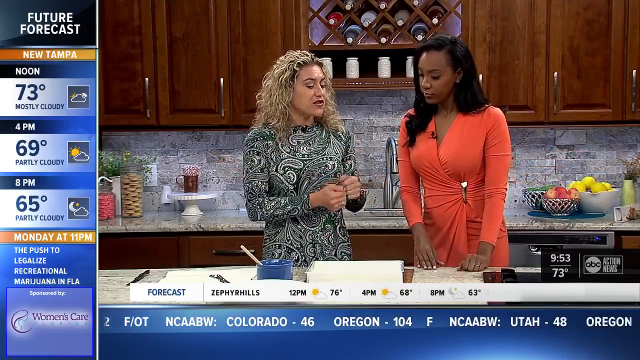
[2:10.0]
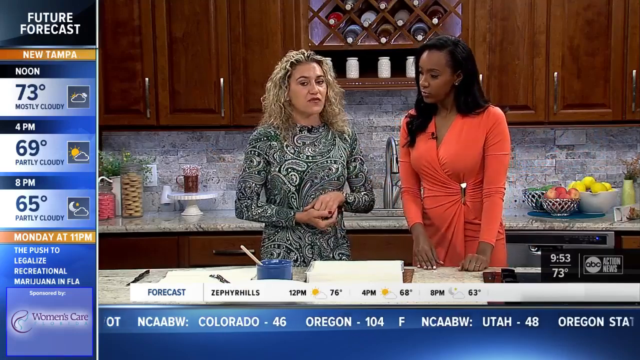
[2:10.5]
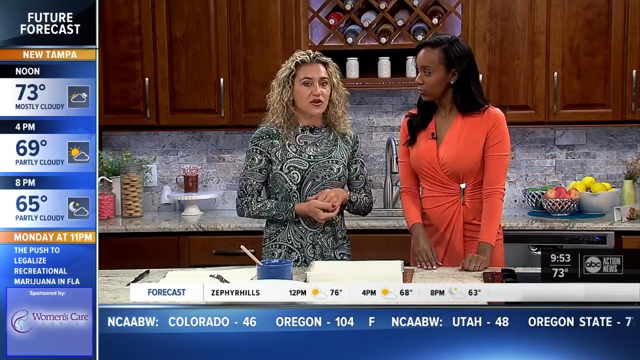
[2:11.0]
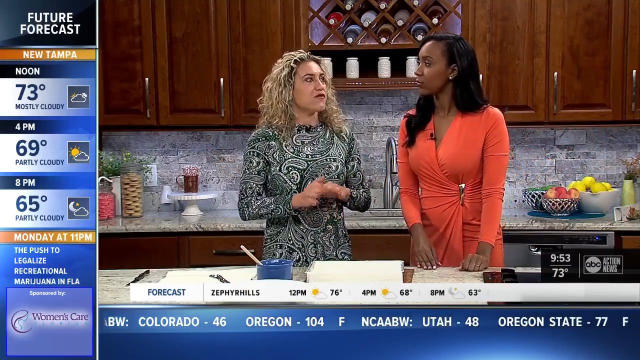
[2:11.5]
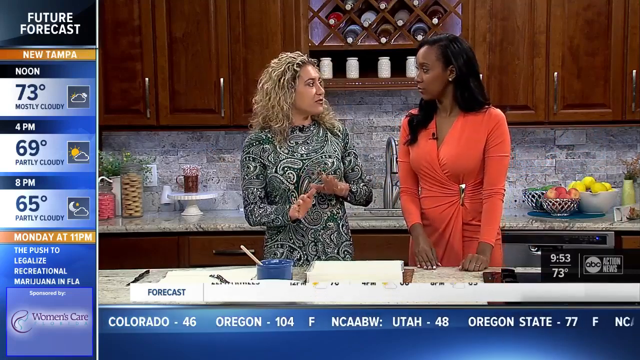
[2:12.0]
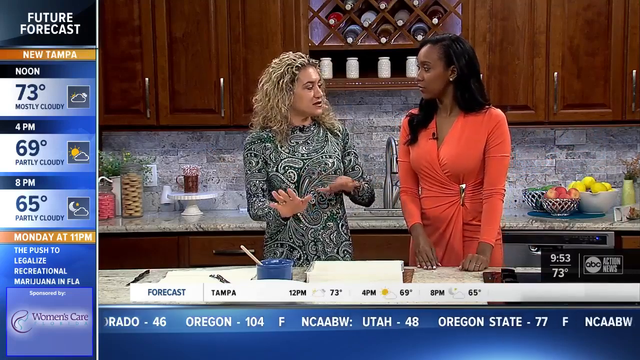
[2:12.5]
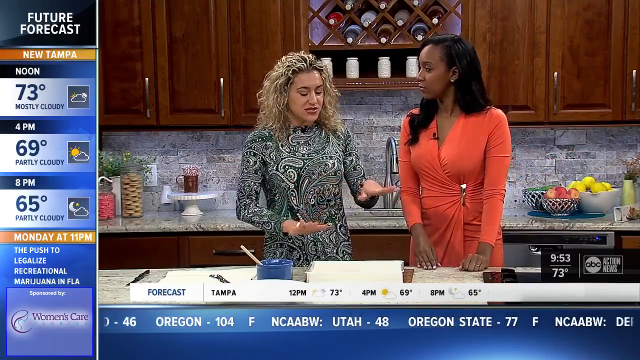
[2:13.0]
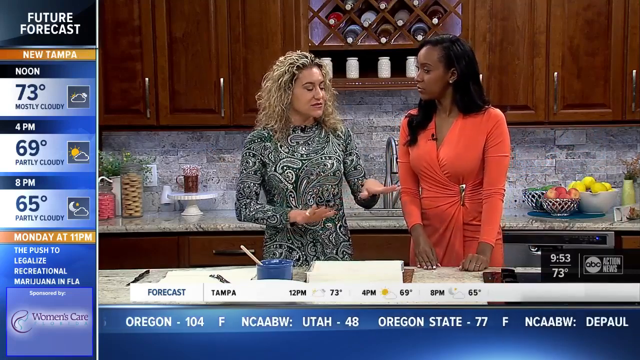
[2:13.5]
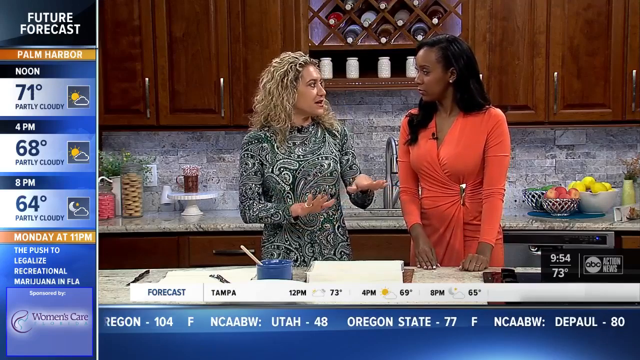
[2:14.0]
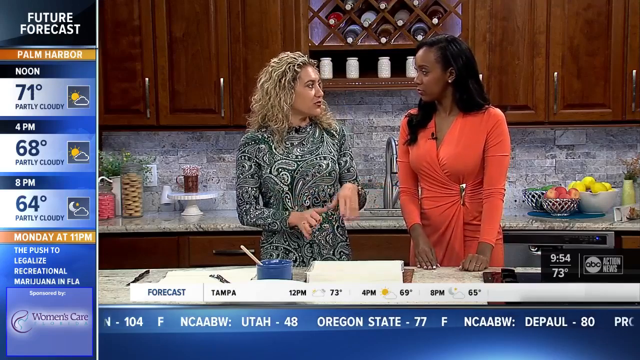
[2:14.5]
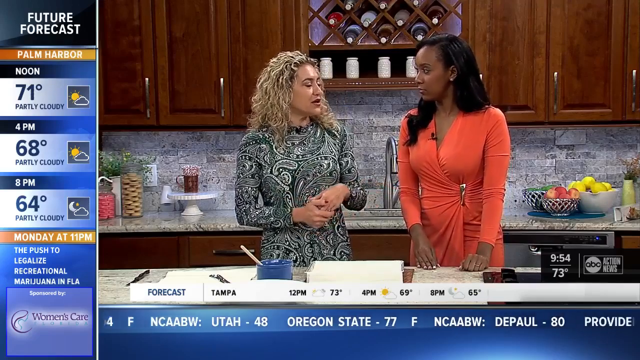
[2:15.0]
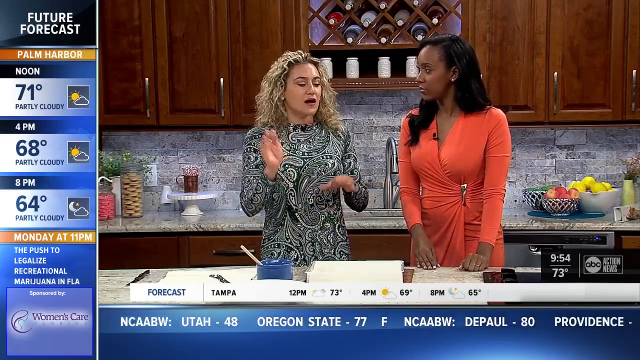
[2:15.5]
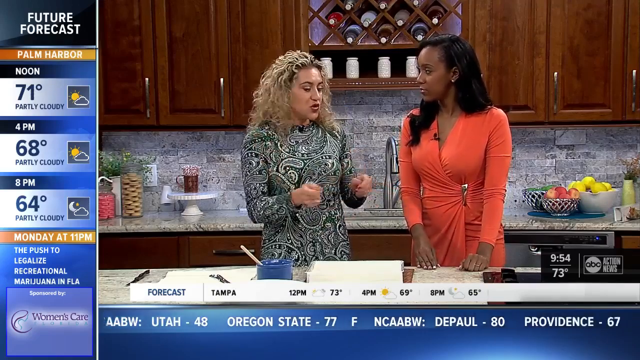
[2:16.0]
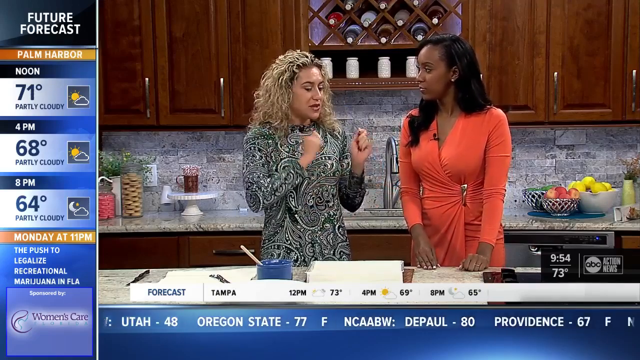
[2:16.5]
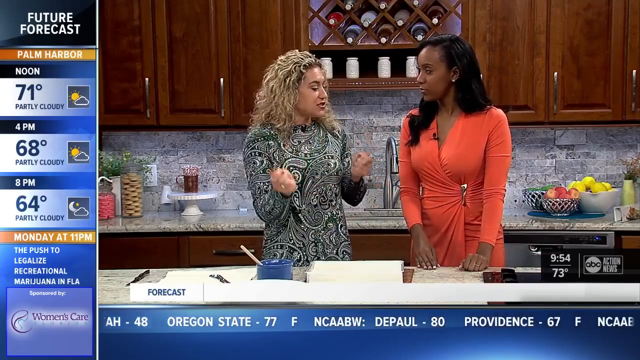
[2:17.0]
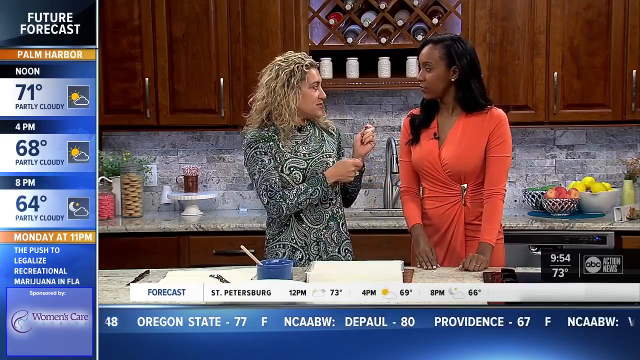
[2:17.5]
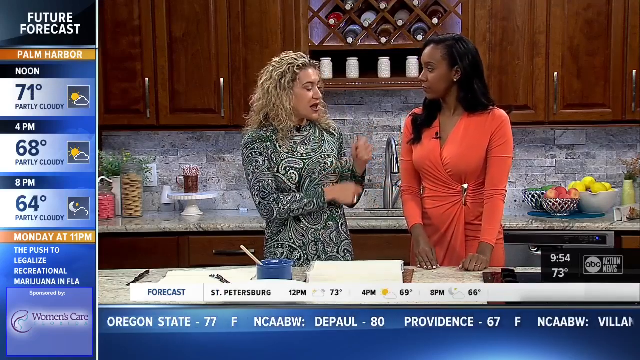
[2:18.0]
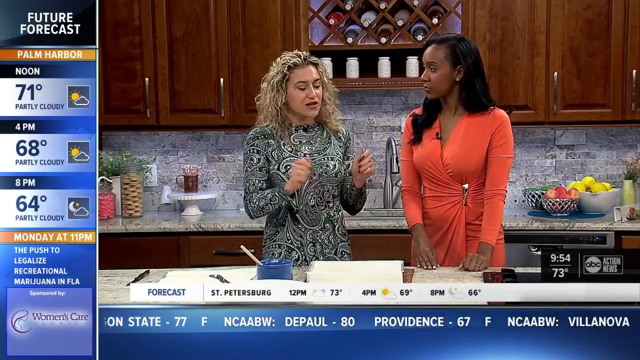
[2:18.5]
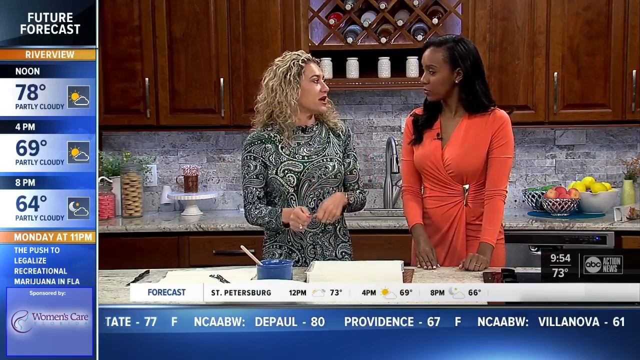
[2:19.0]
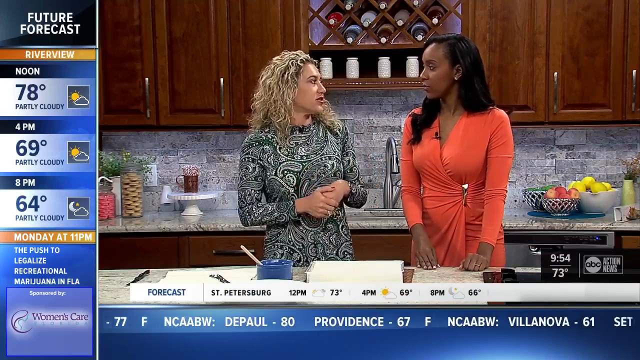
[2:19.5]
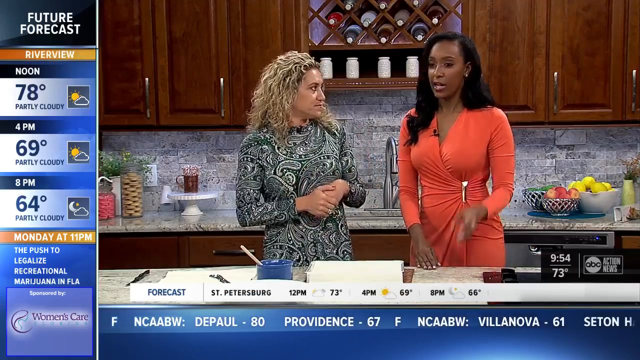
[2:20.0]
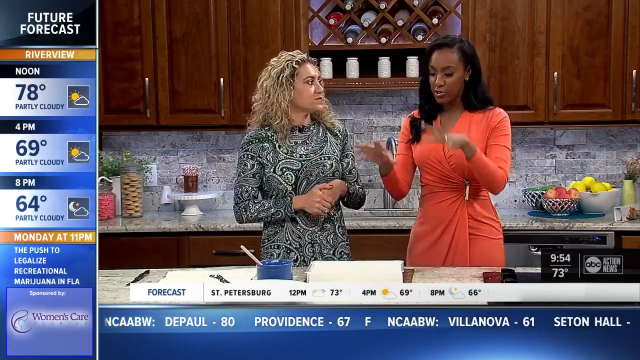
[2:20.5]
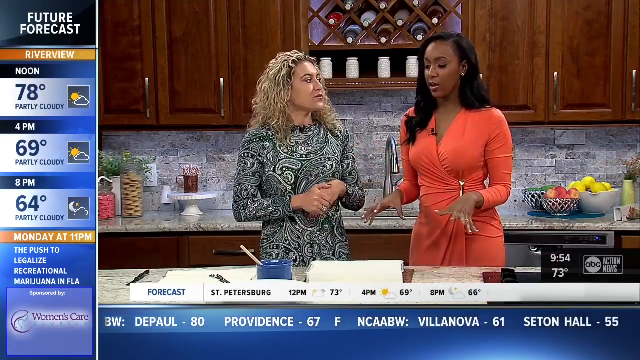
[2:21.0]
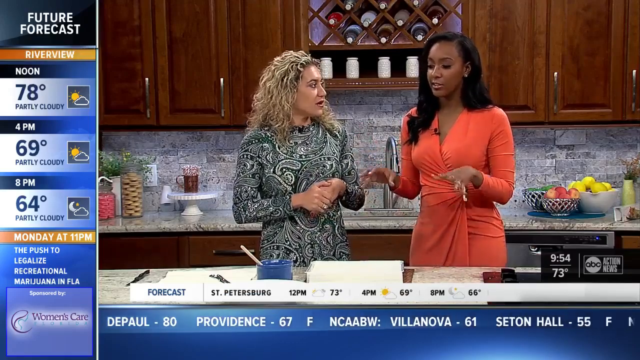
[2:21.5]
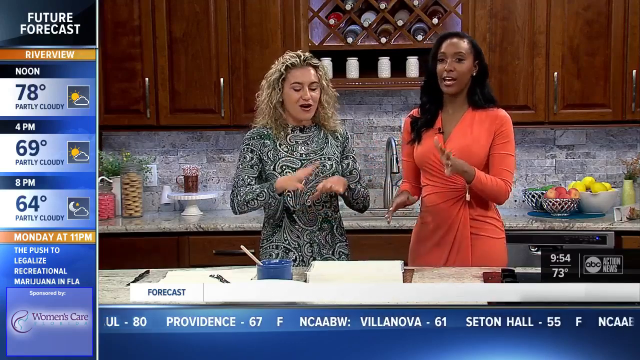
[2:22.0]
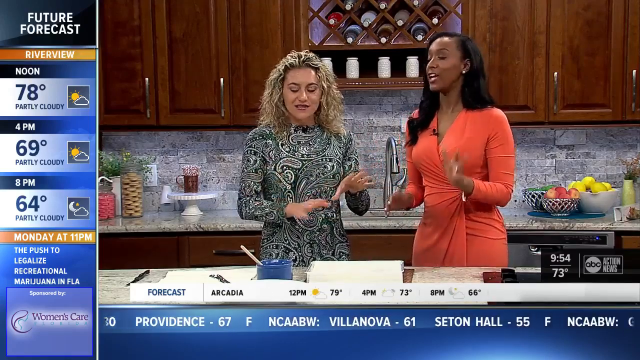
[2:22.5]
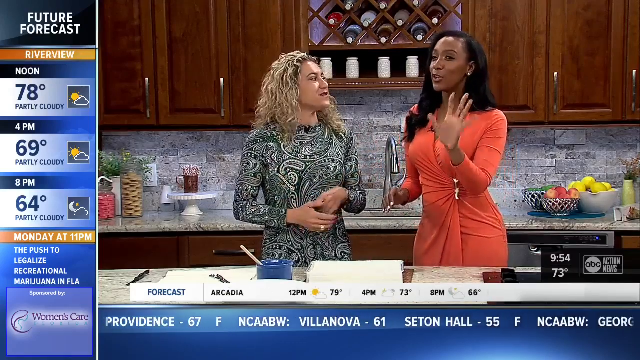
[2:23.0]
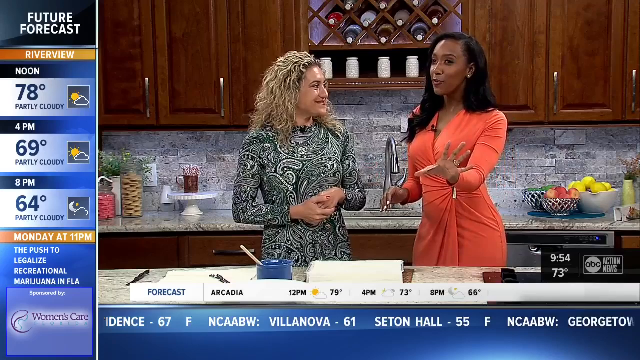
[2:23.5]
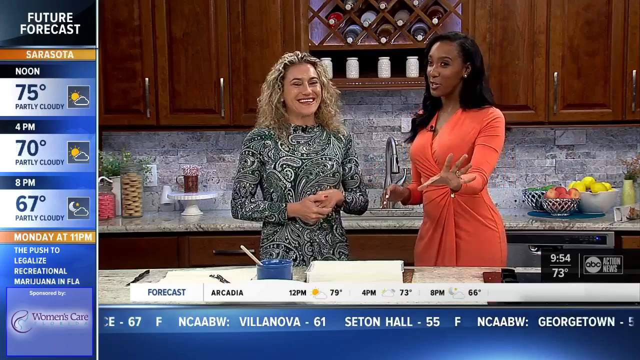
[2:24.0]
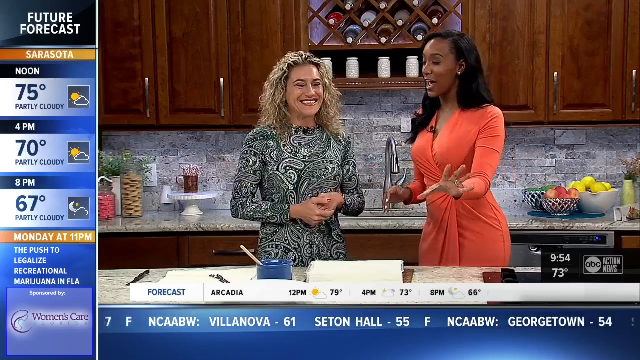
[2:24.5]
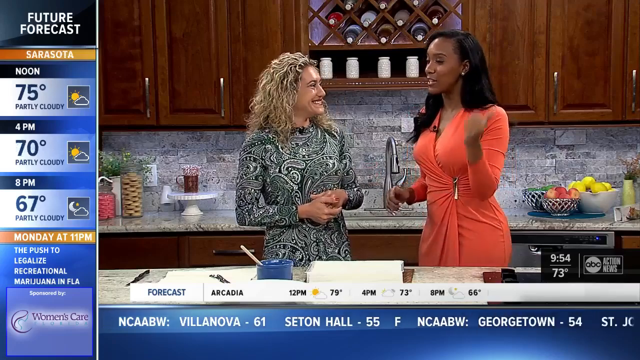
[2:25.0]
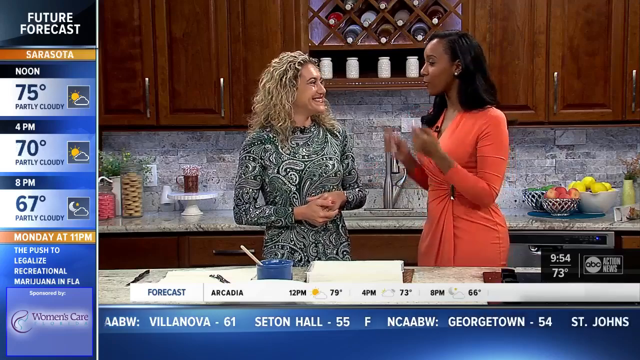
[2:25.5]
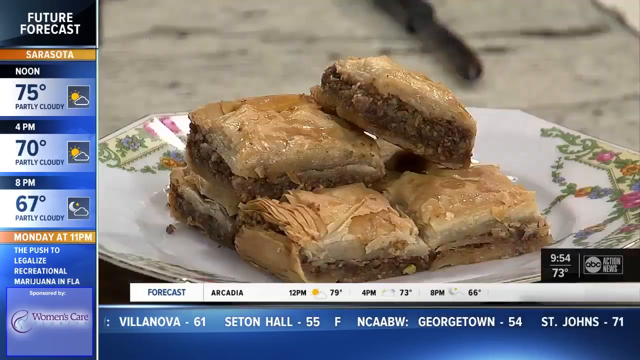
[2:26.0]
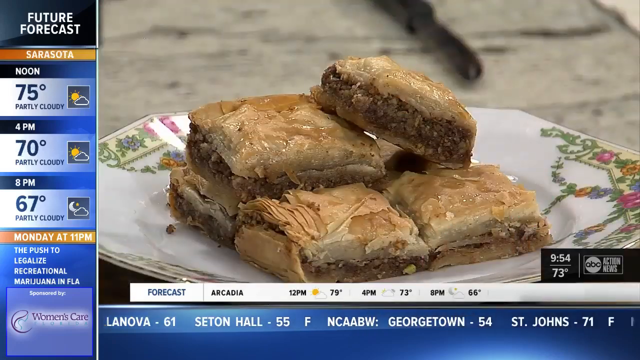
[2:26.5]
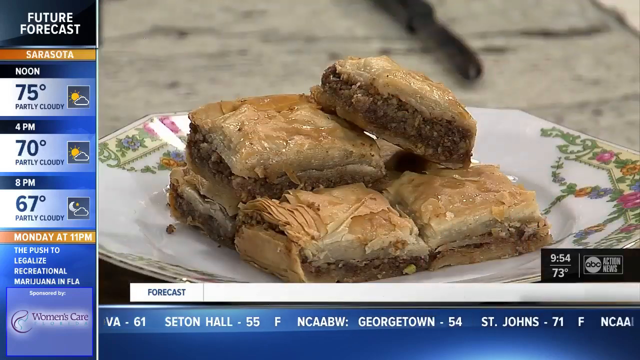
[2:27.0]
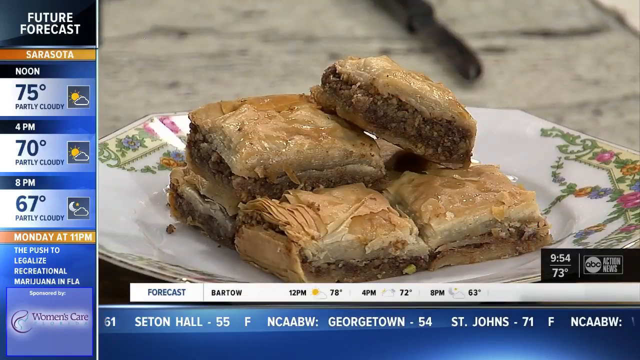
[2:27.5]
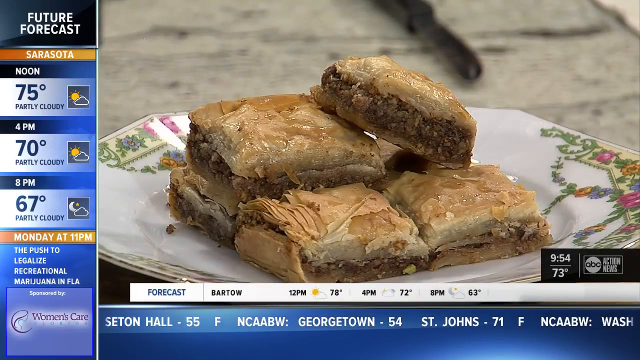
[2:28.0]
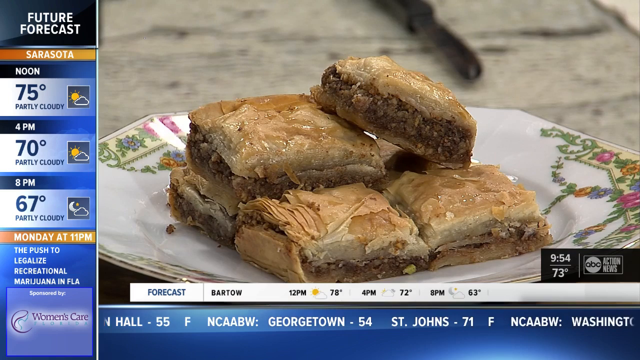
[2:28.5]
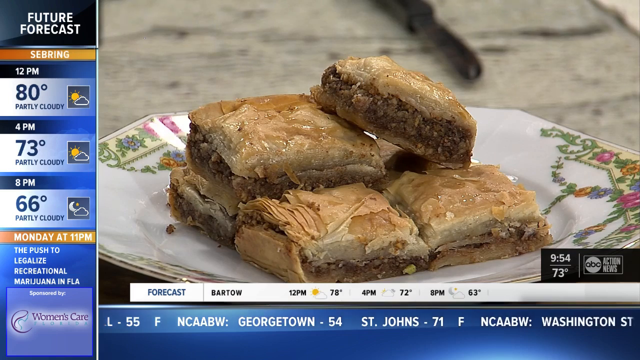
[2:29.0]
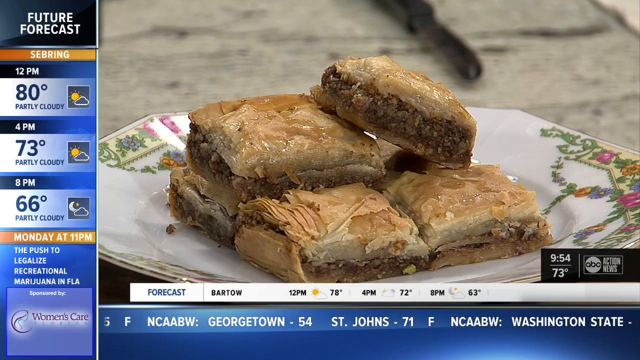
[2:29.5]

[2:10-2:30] The women in the kitchen discuss things as they demonstrate. The future forecast is still up, now for New Tampa: noon, 73 degrees, mostly cloudy; 4 p.m., 69 degrees, partly cloudy; 8 p.m., 65 degrees, partly cloudy; with Monday at 11 p.m. and the same information underneath. The back wall under the cabinets has something like tiles that look like grayish brick, possibly some type of marble. Both women use their hands as they speak, and the woman who was working with the pastry sheets seems to gesture as if baking with her hands, as an example. Then what looks like a close-up of the finished pastry appears, back in cube format and stacked on a plate.